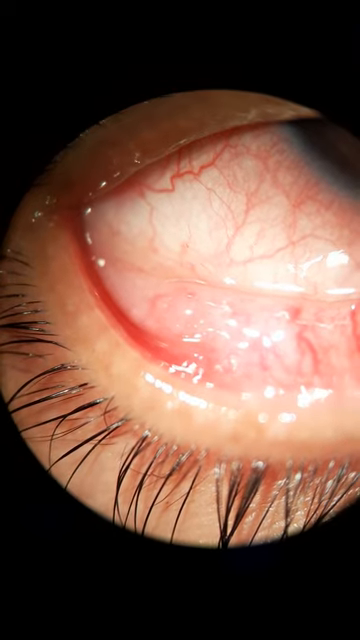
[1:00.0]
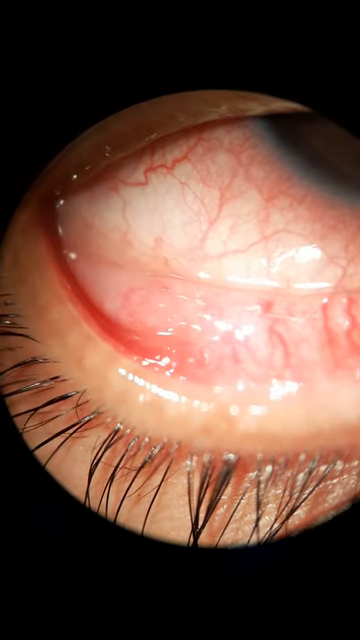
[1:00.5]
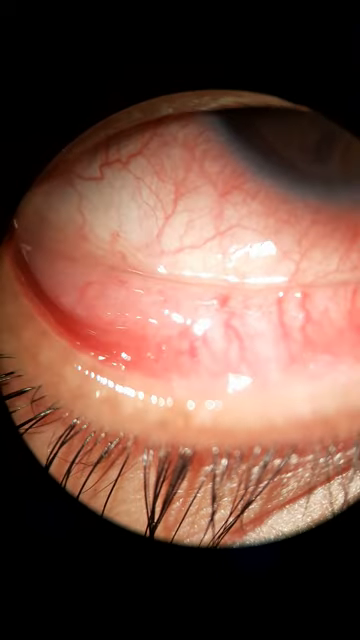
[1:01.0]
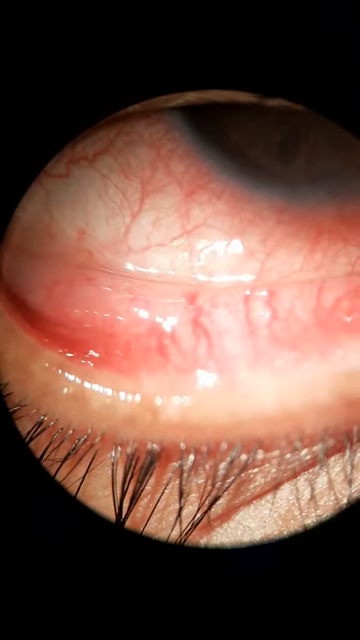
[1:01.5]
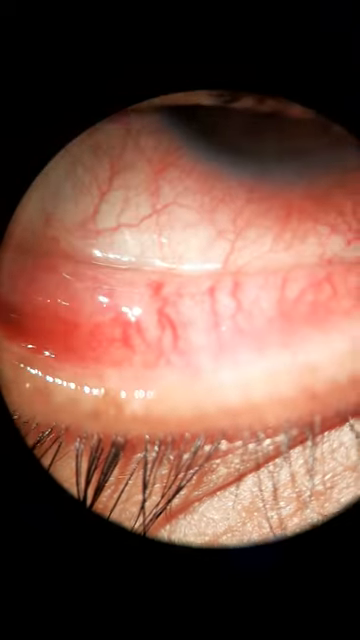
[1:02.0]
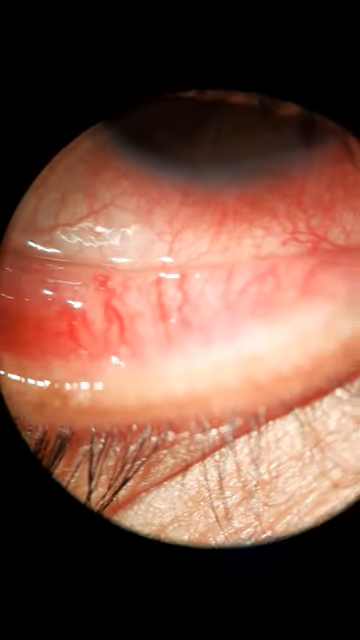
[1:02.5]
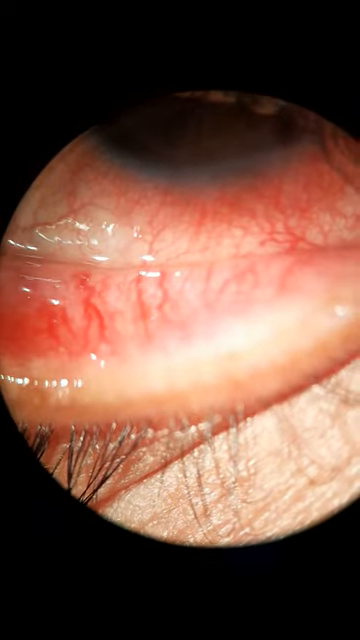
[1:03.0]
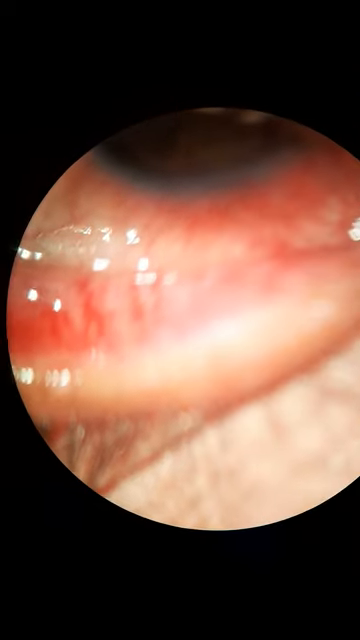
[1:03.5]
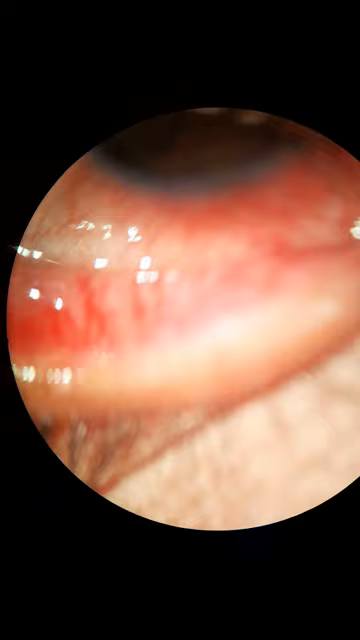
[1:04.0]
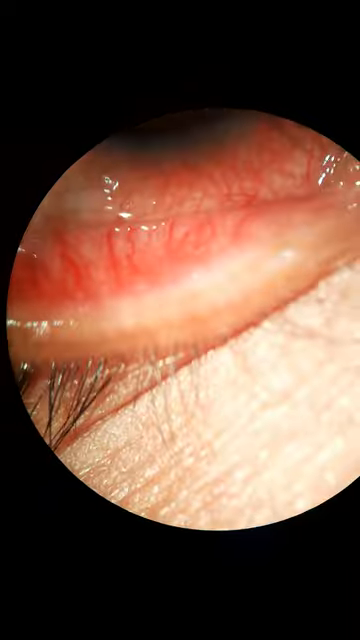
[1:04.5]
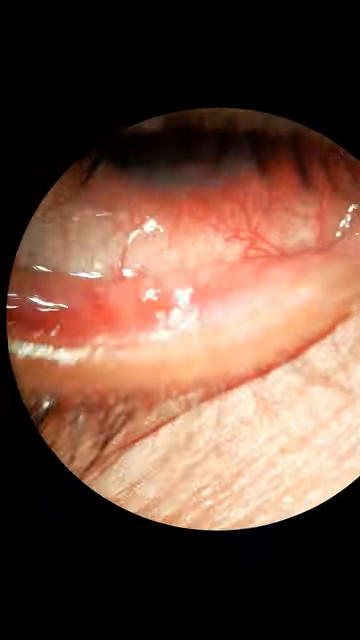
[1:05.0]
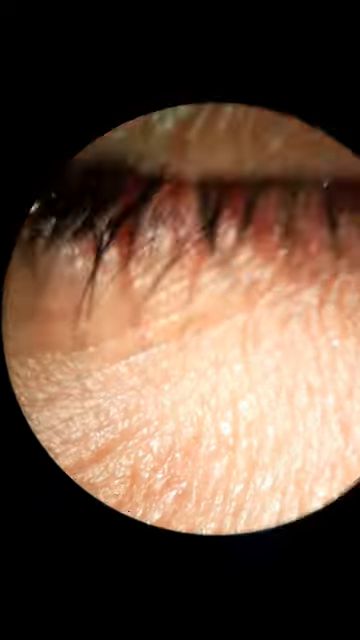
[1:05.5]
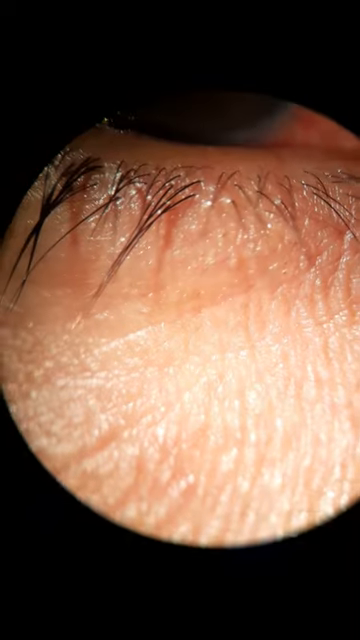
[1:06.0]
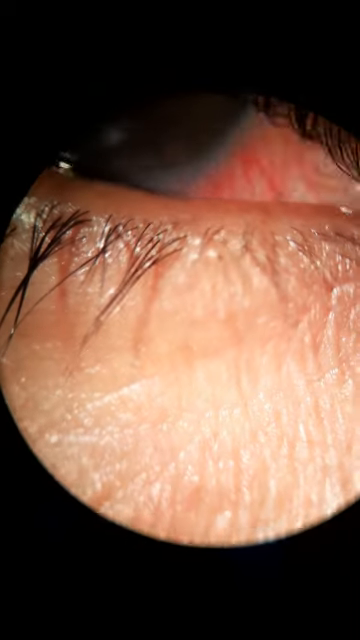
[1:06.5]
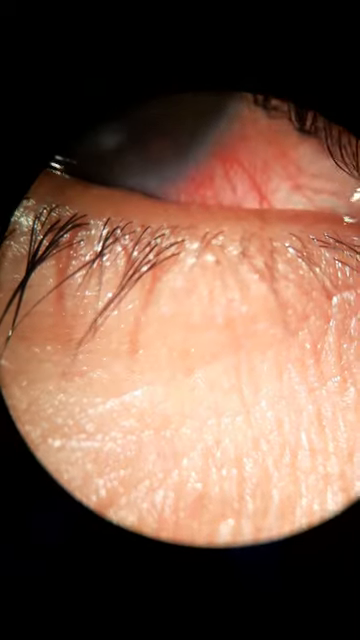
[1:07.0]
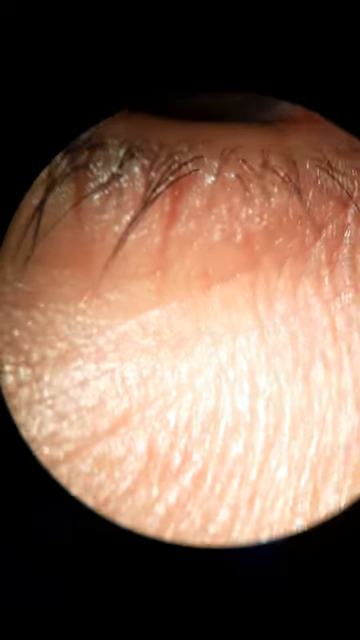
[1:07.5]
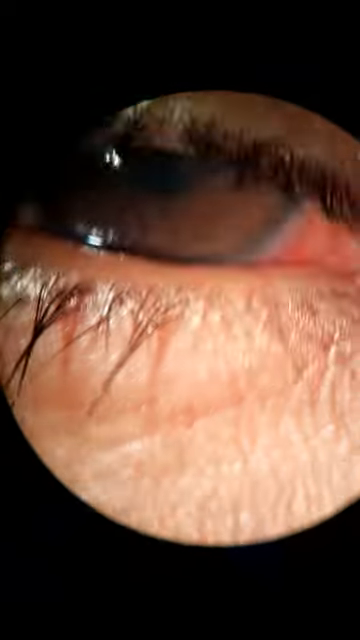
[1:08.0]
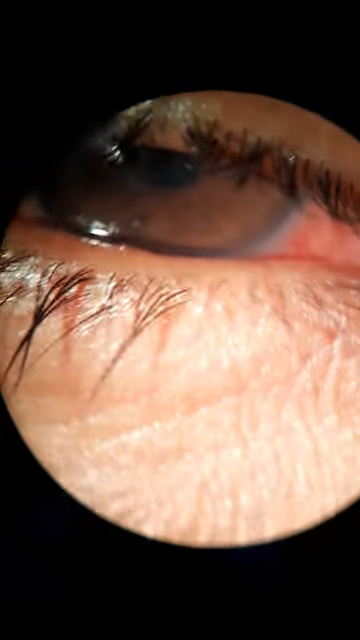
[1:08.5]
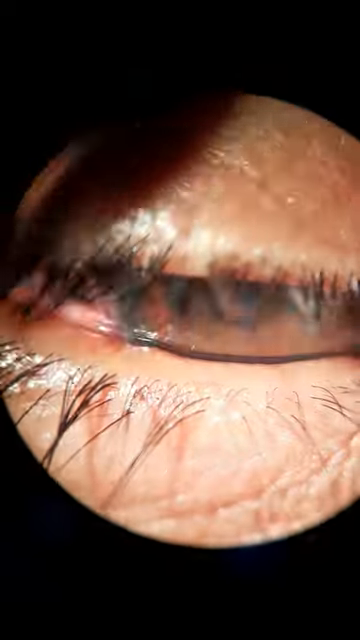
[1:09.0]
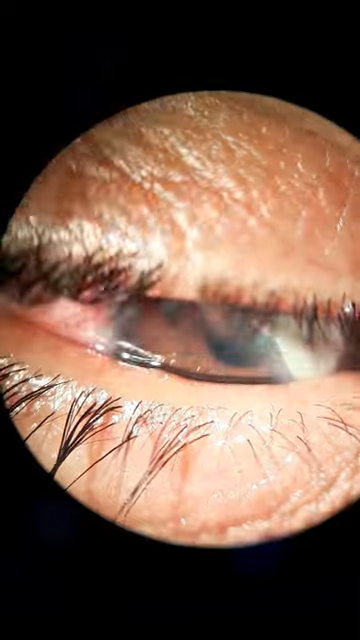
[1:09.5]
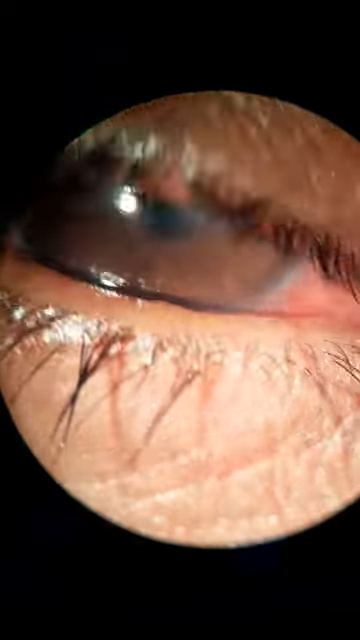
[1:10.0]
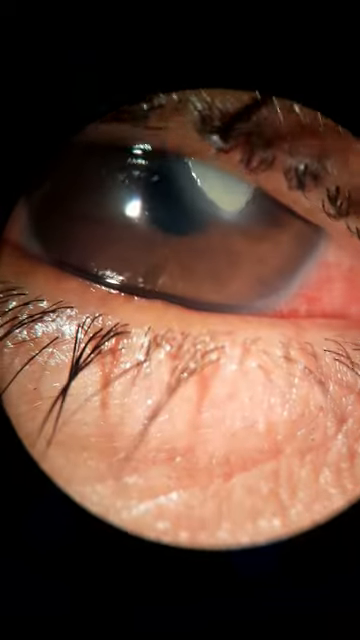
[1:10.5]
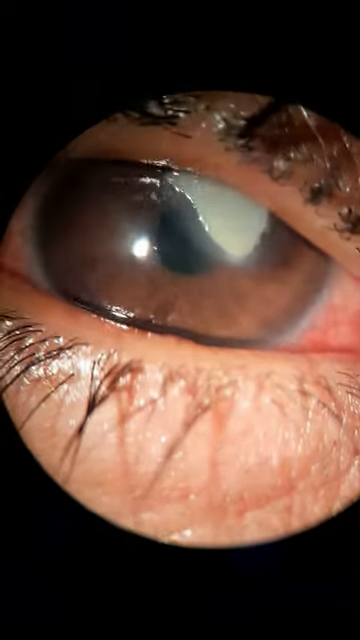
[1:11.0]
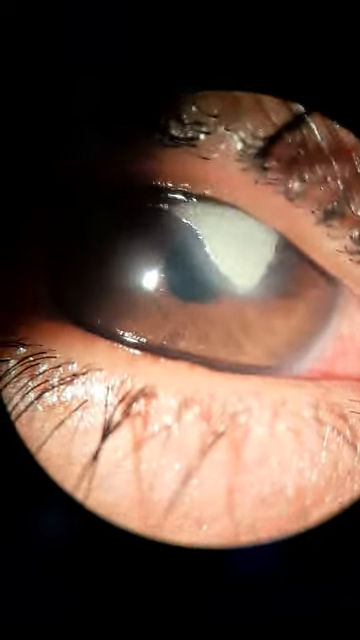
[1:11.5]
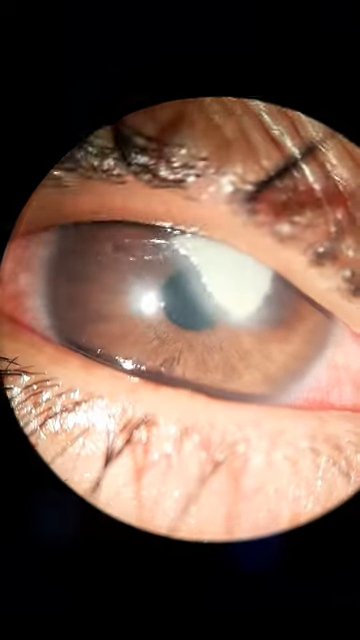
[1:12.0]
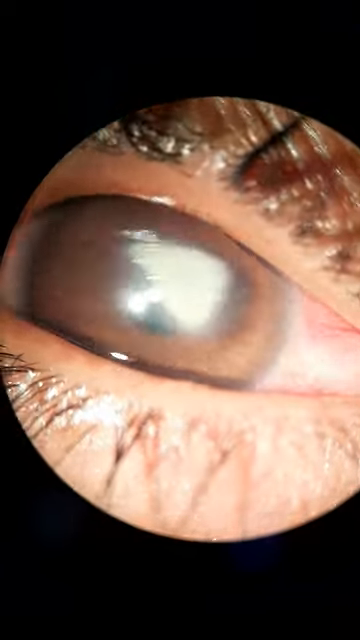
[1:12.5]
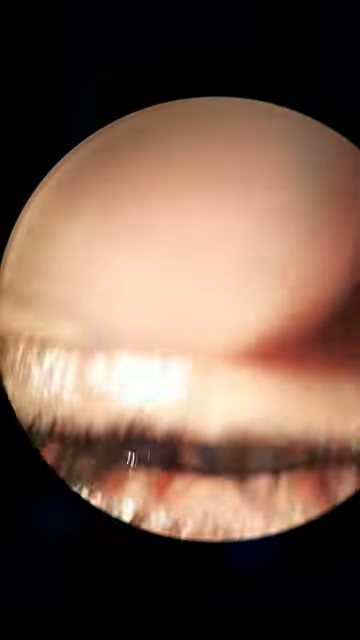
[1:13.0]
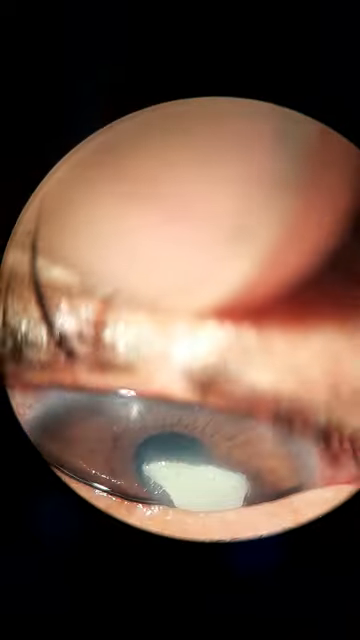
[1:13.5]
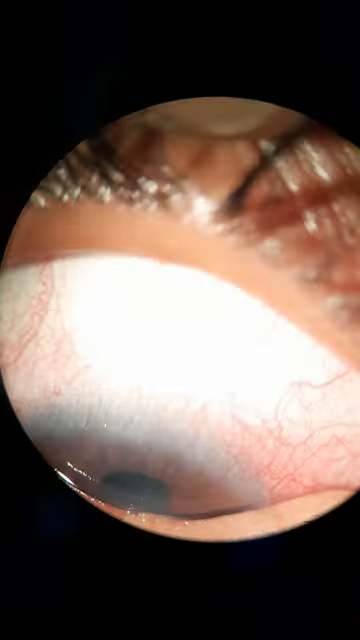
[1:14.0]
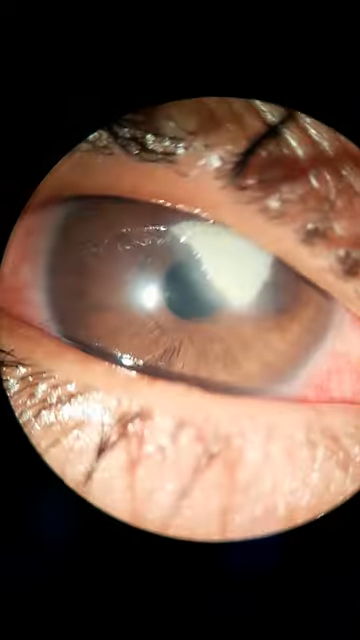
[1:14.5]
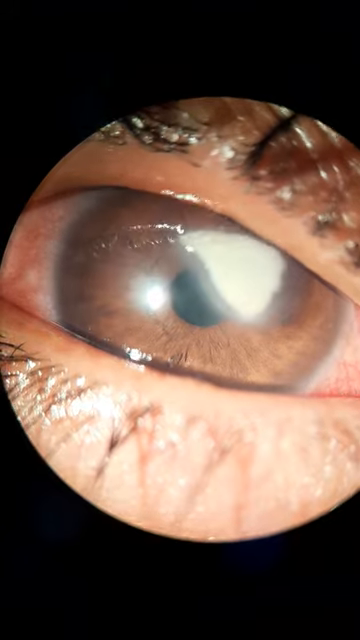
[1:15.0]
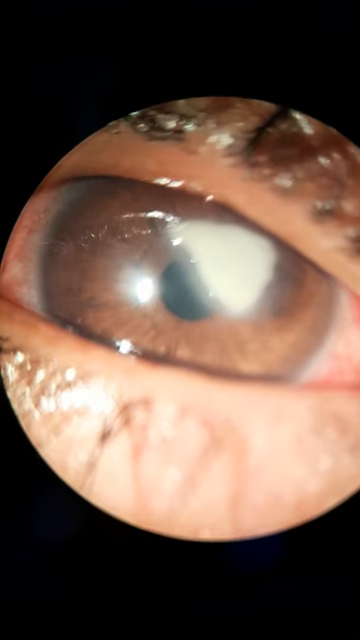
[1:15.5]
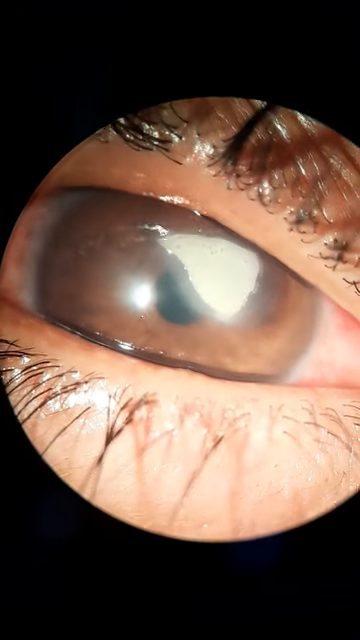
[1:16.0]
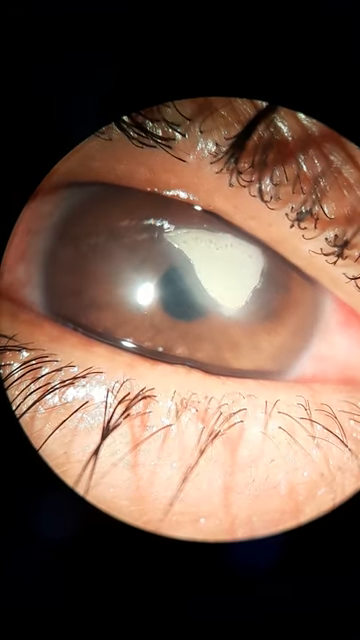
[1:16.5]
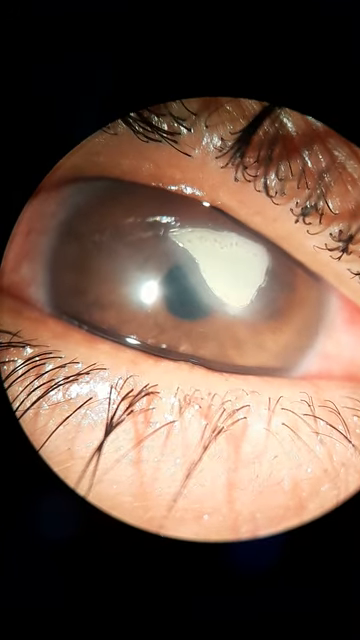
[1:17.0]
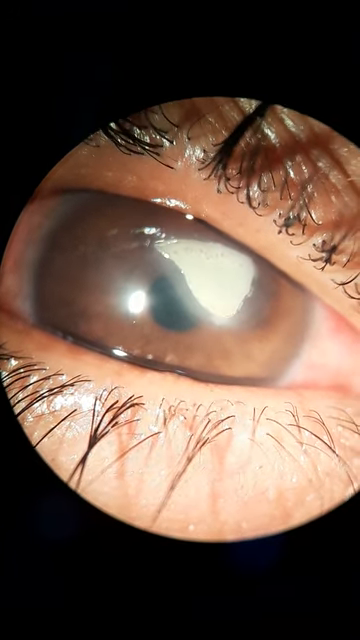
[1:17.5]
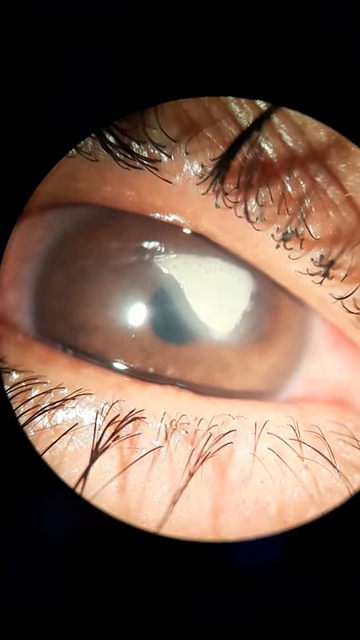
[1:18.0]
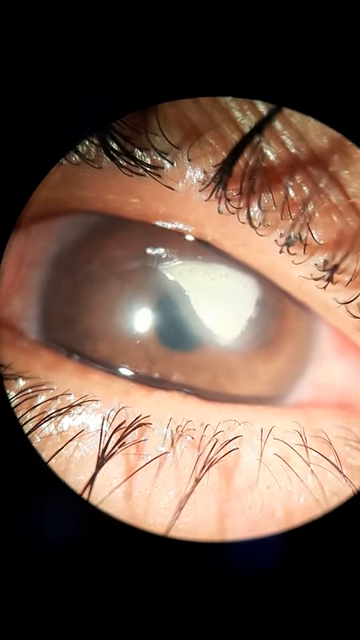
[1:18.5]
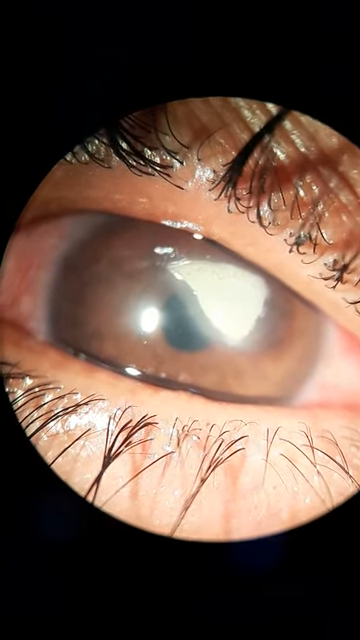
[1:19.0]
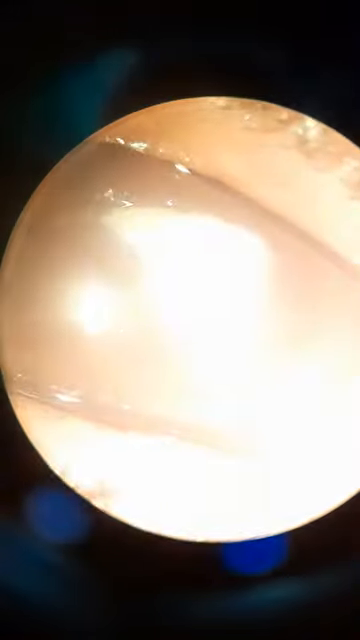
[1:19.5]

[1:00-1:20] Close-up images of a human eyeball continue. The eyes appear to be brown or hazelnut, with a lot of redness, and the eyelashes are visible. The person appears to look around as a very bright light is shined into the eye. The person blinks several times, and the wetness on the eyeball can be seen. Later, a finger appears to gently pull up the eye to expose more of the eyeball. An eyeball examination is taking place, apparently done by a doctor of some kind.